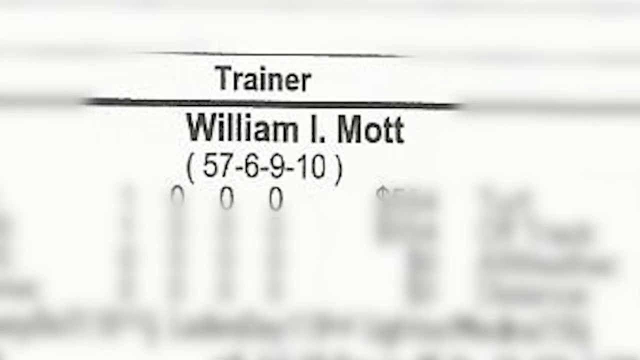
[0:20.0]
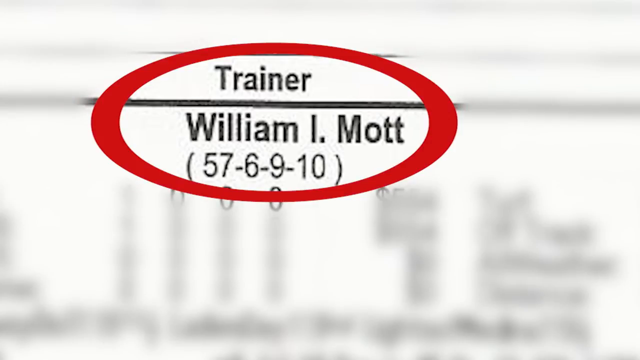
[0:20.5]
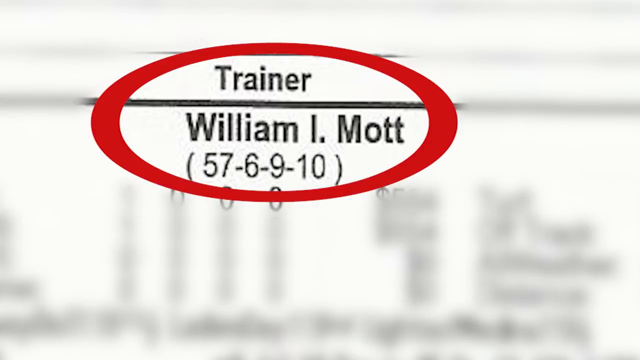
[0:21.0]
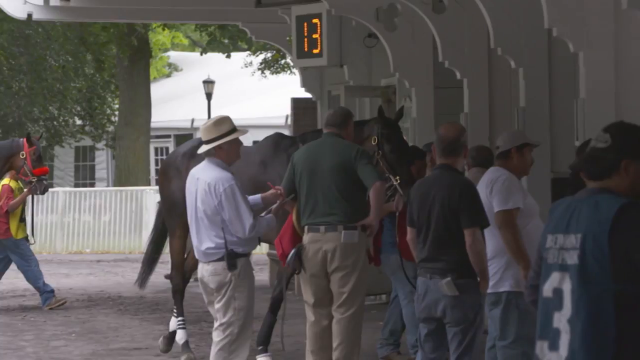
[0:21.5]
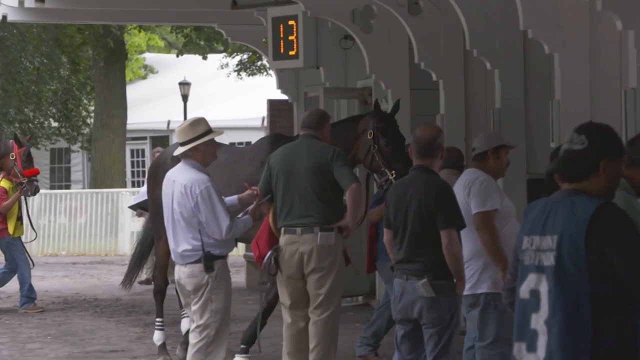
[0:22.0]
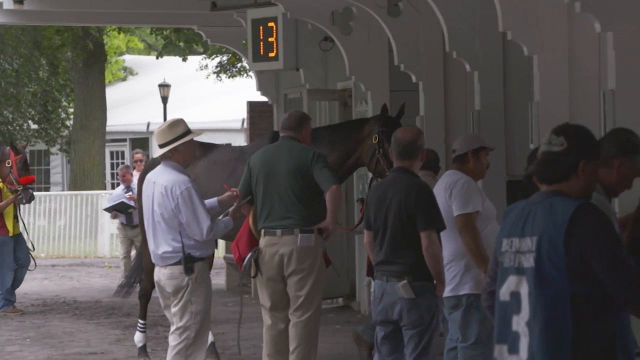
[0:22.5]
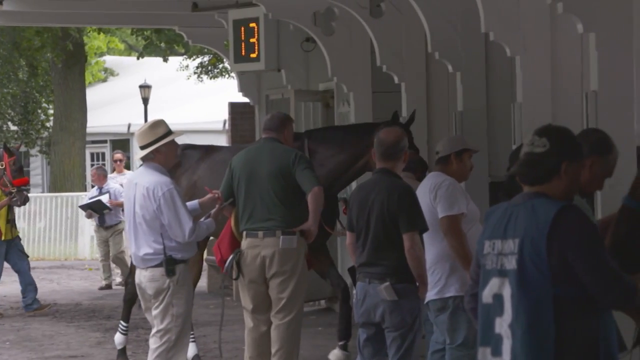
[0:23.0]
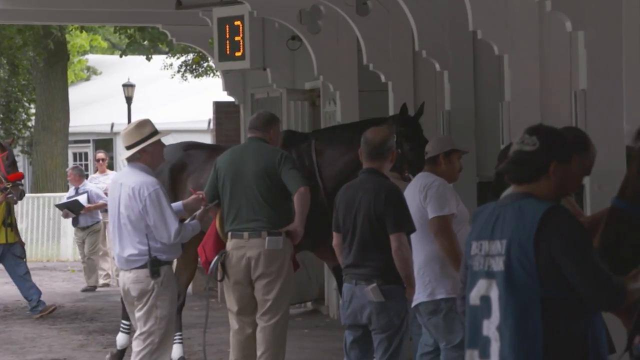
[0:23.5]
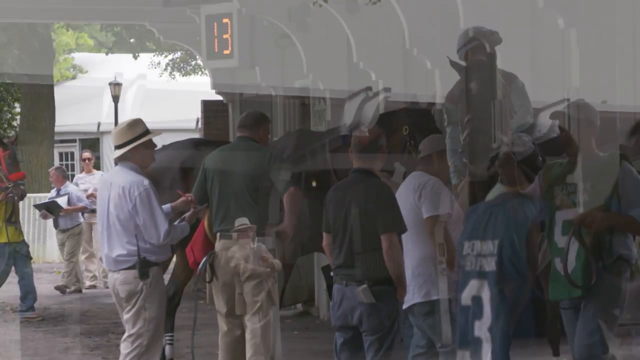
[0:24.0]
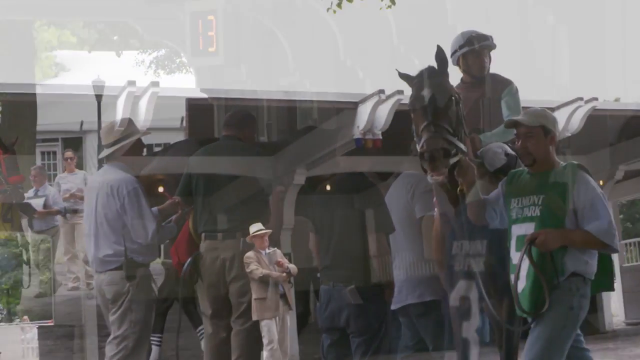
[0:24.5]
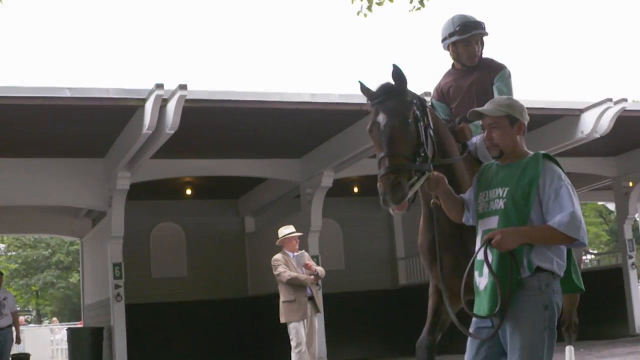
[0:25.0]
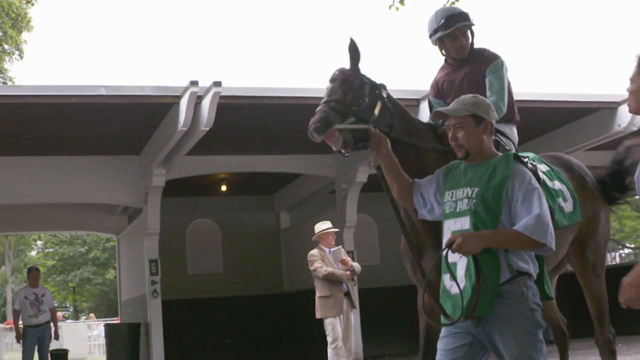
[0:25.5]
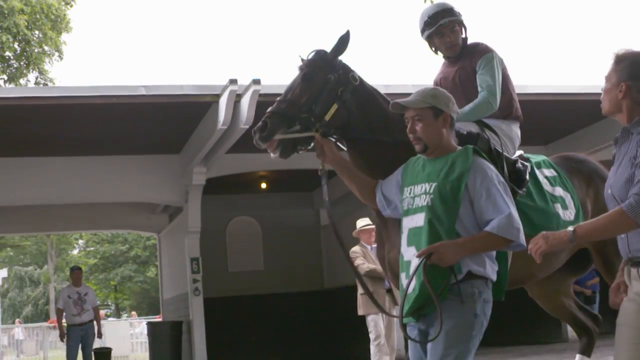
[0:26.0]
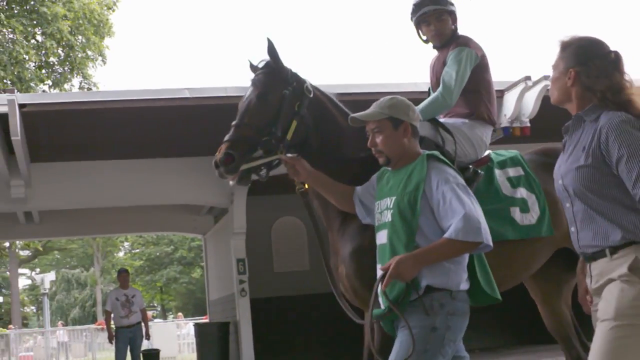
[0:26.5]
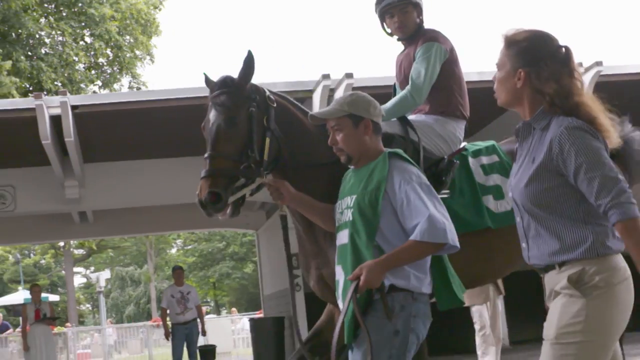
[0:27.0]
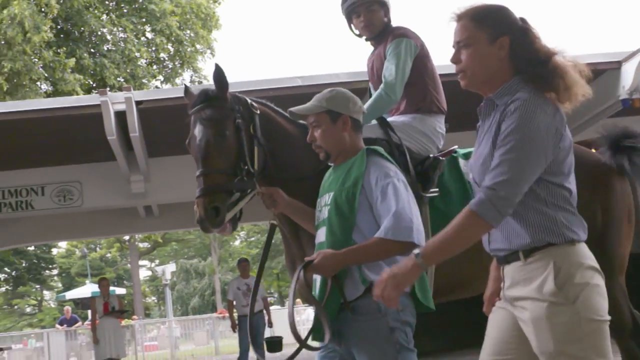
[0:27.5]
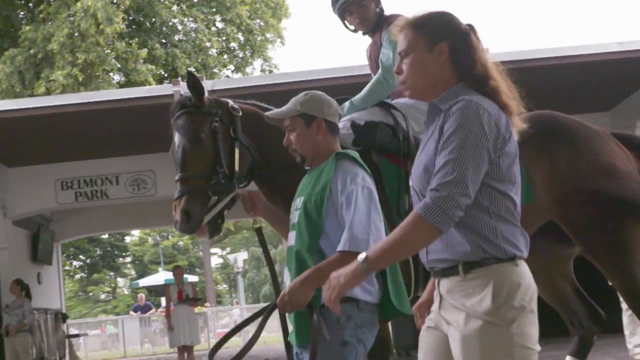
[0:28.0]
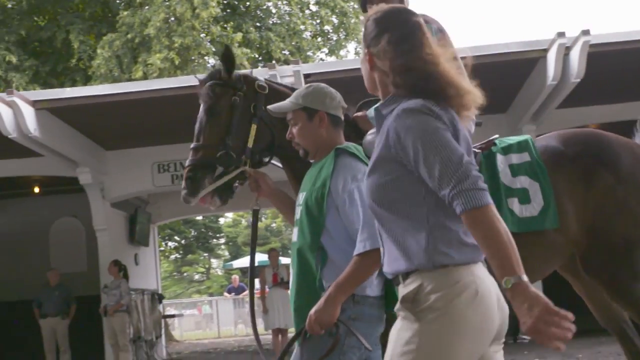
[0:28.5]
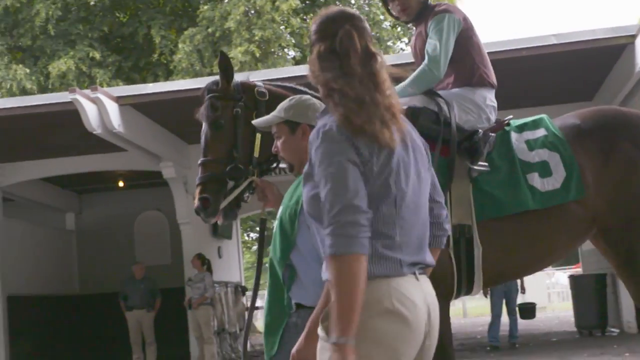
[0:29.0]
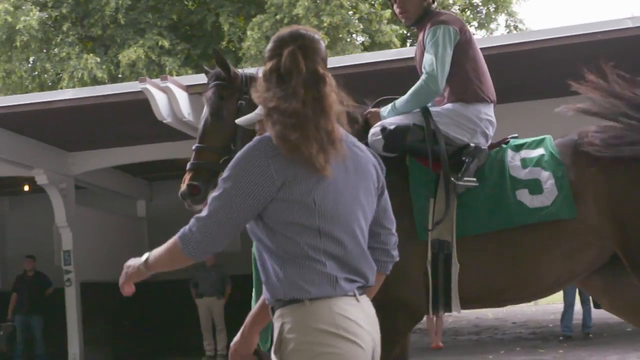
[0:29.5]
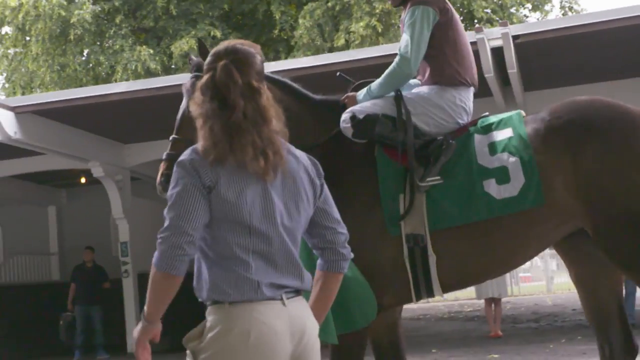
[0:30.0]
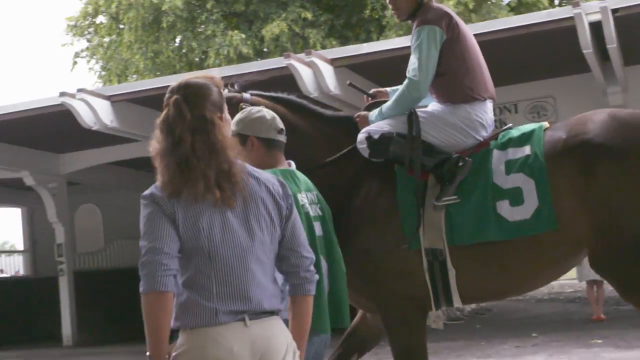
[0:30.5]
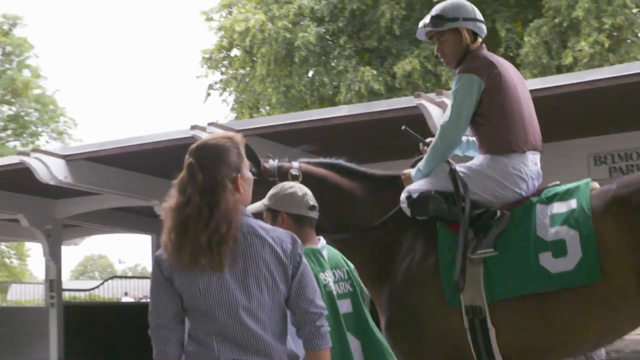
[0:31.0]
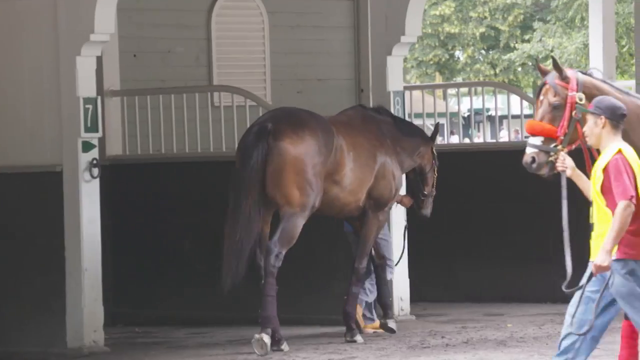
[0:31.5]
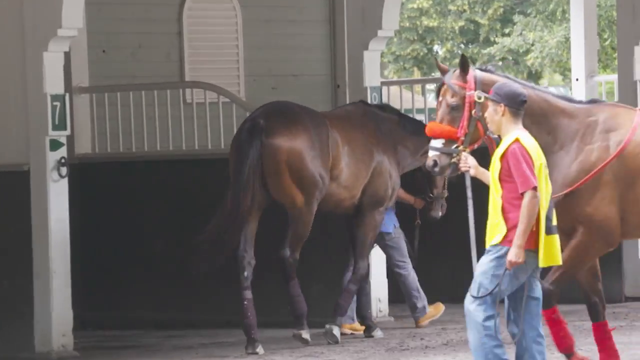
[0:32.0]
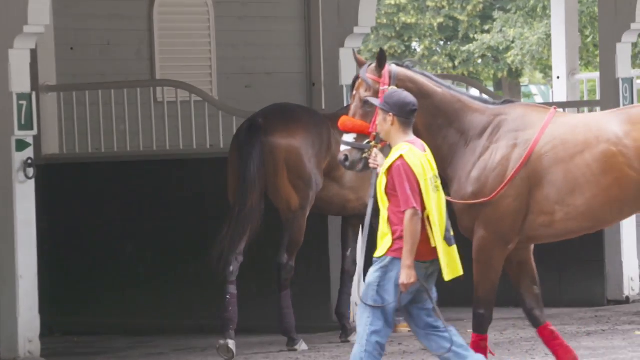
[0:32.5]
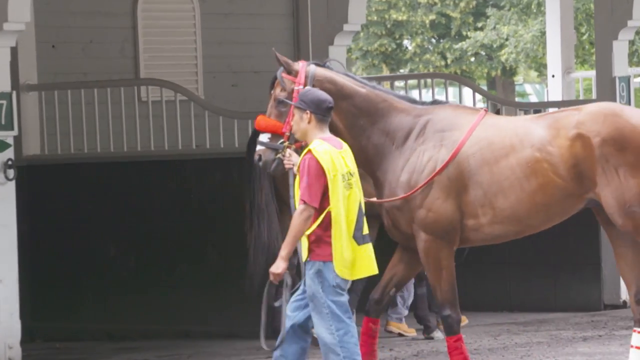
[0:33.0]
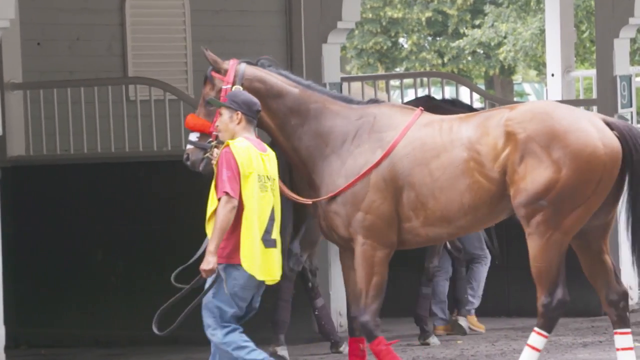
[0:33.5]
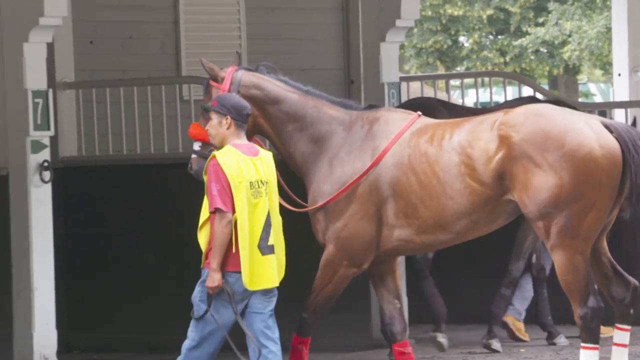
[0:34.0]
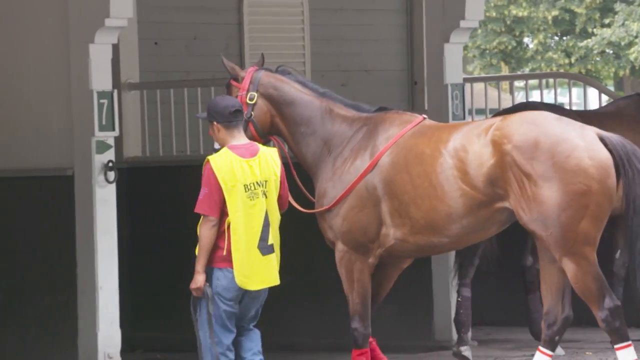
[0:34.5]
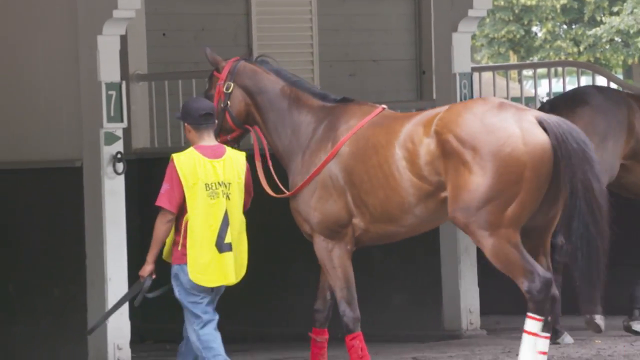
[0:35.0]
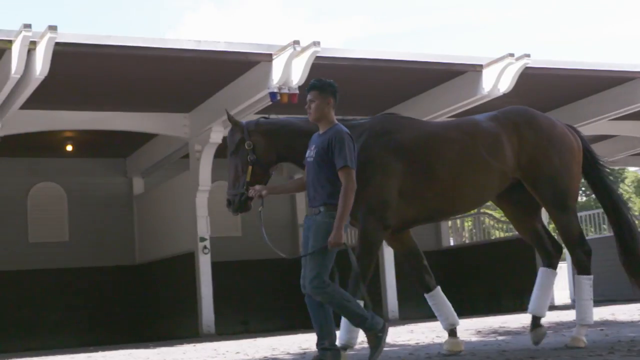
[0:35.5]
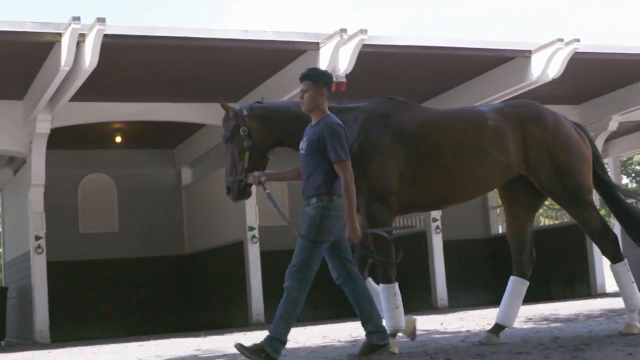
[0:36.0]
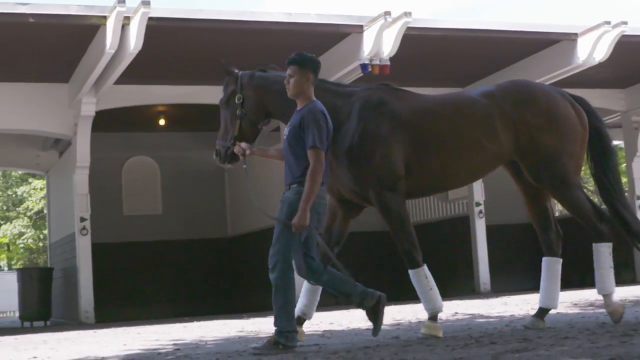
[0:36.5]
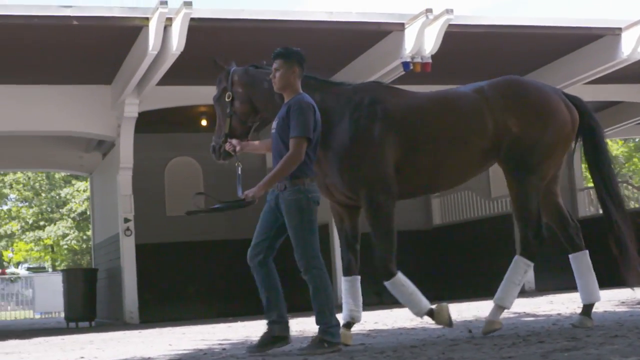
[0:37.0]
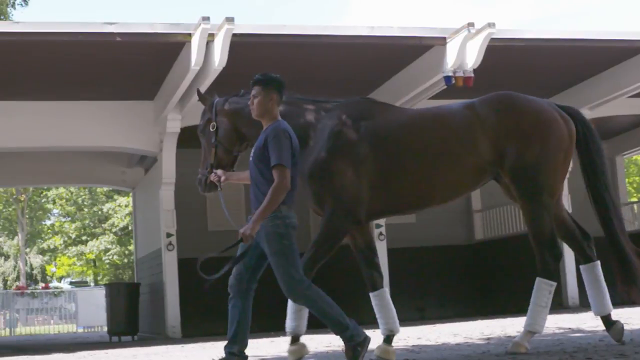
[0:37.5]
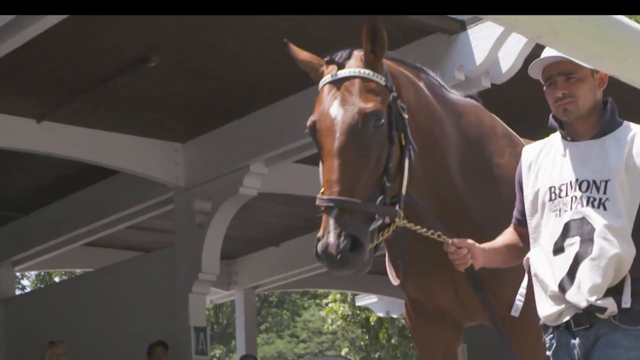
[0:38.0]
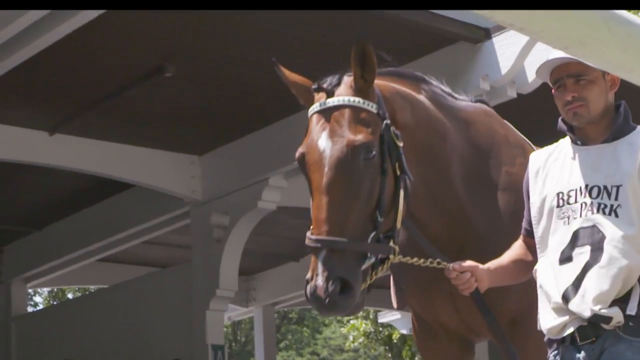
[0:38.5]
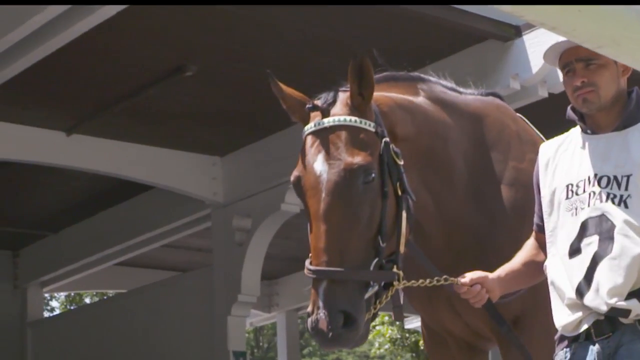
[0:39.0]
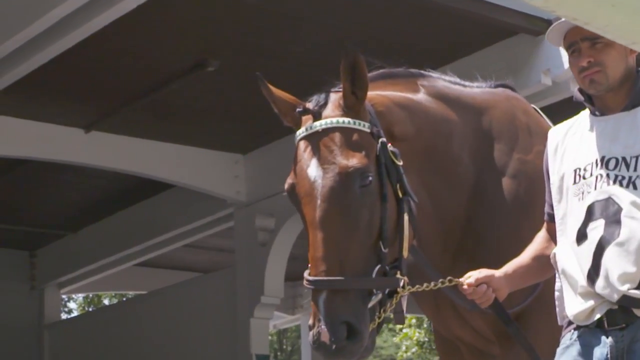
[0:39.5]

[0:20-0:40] A white paper reads "trainer William I. Mott" followed in parentheses by "57 - 6 - 9 - 10." A horse is shown, along with a small number sign on a wall reading "13," and people stand around as the horse moves. A man in a green vest helps lead horse number 5 around the track. Other people walk the other horses, numbers 5, 4 and 2 among them, around the track before the race starts. Several people stand around the area where the horses walk, and there is a black light post, a tree nearby, and a building. The people are watching to look at the horses before the race starts.